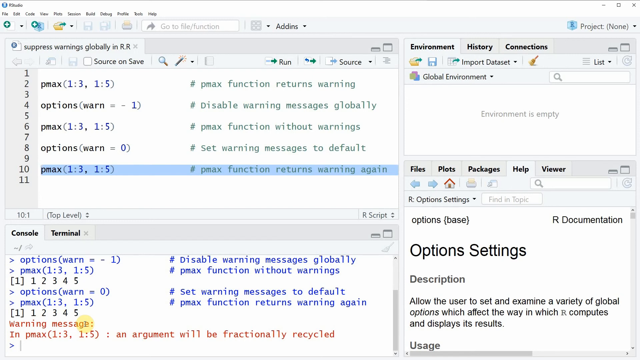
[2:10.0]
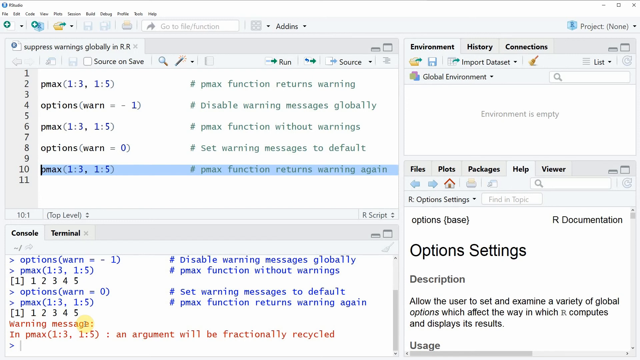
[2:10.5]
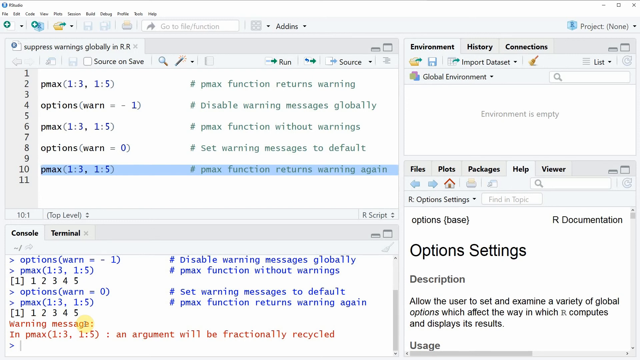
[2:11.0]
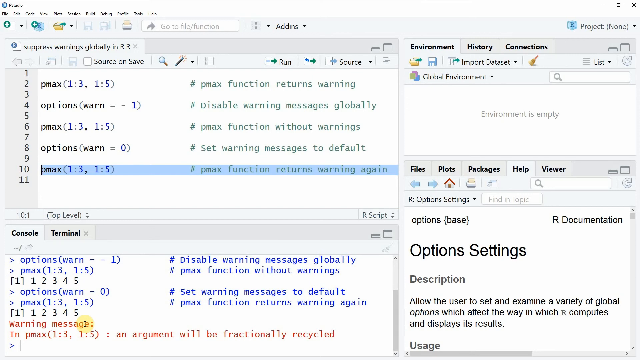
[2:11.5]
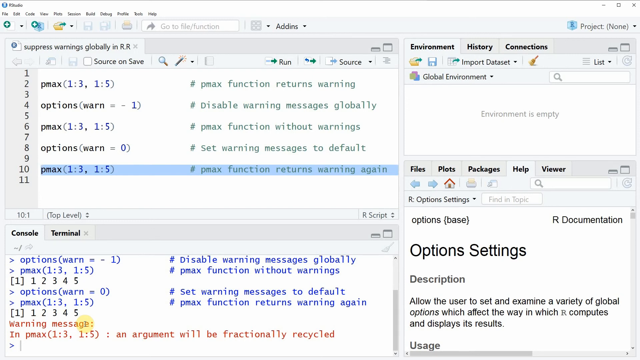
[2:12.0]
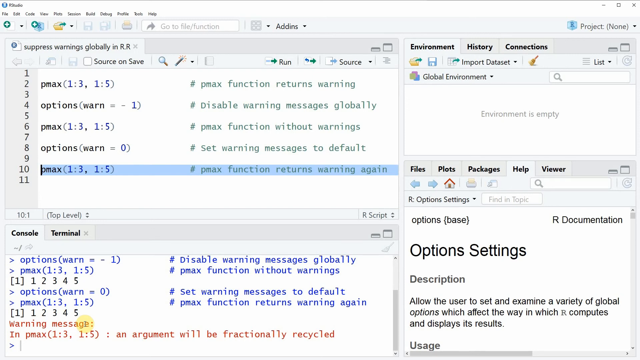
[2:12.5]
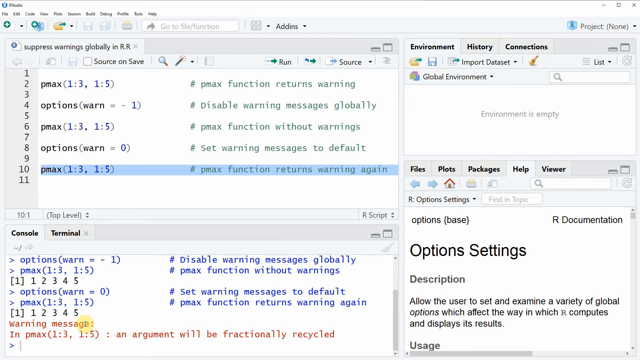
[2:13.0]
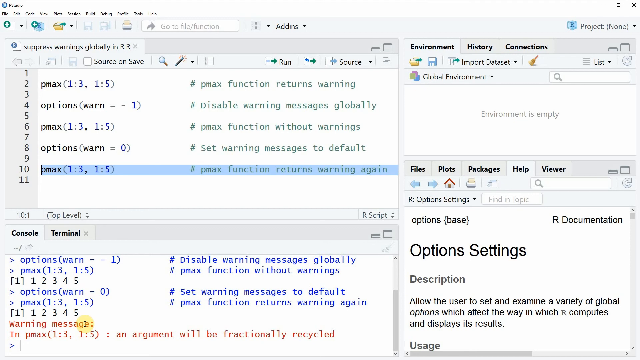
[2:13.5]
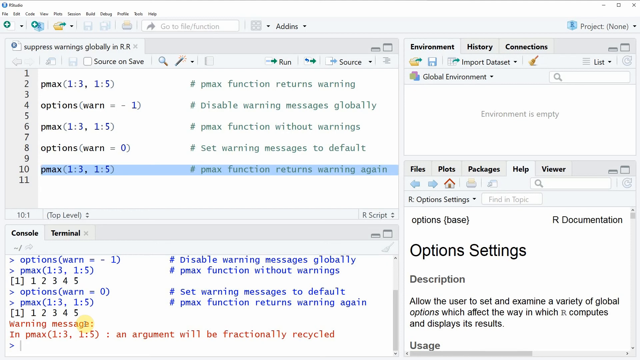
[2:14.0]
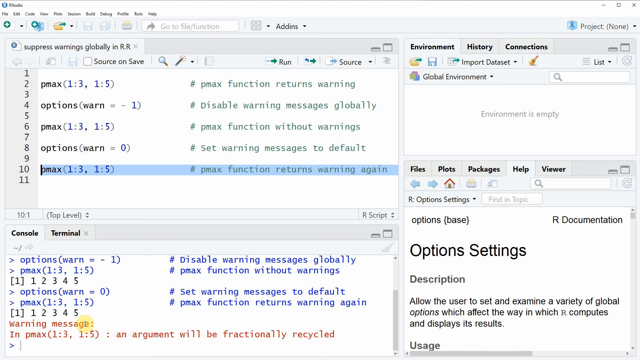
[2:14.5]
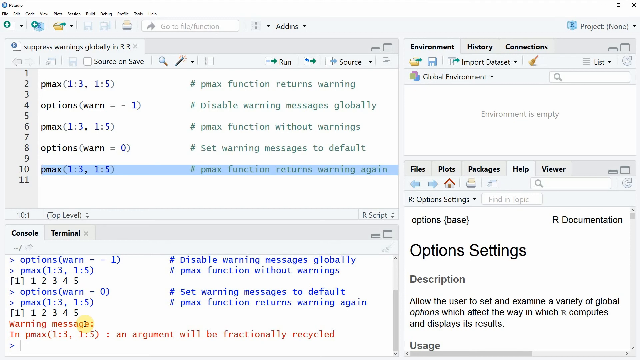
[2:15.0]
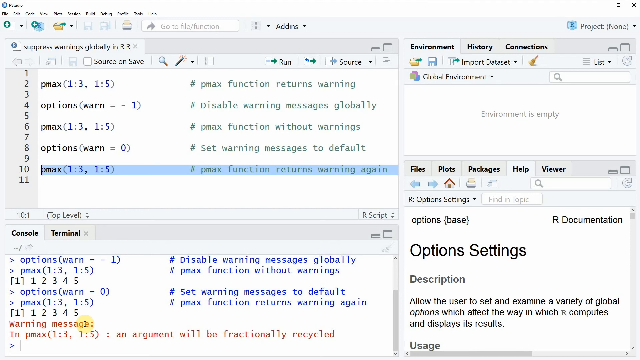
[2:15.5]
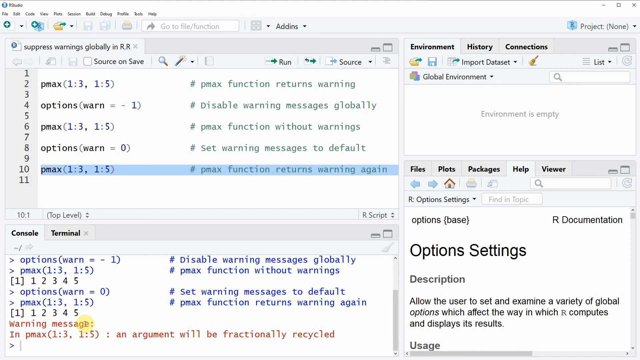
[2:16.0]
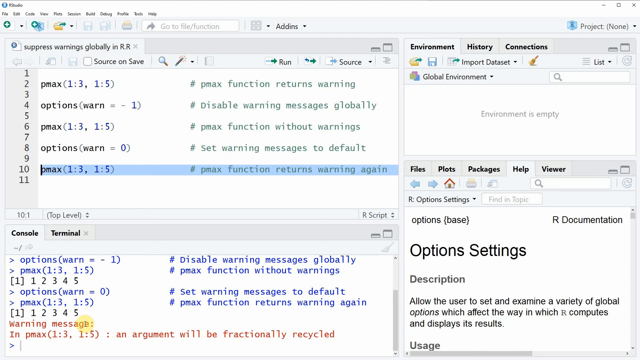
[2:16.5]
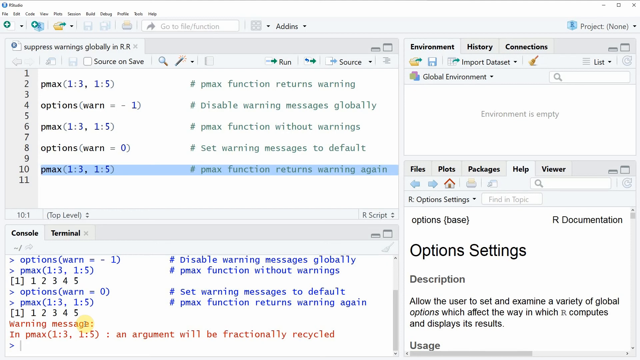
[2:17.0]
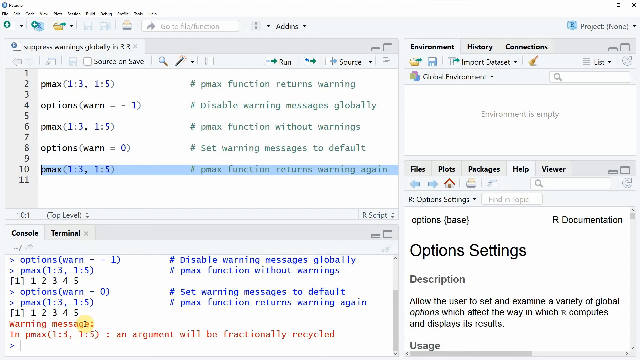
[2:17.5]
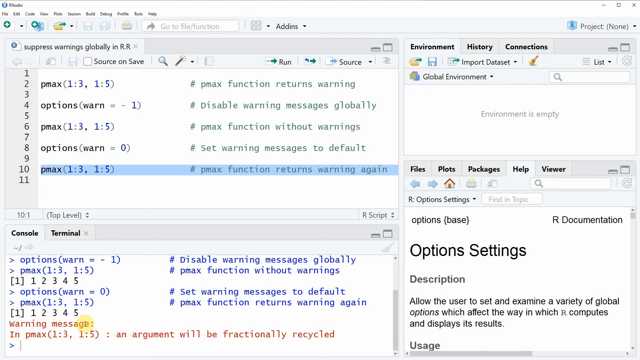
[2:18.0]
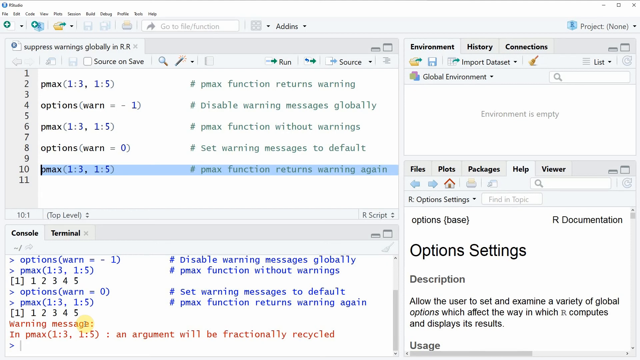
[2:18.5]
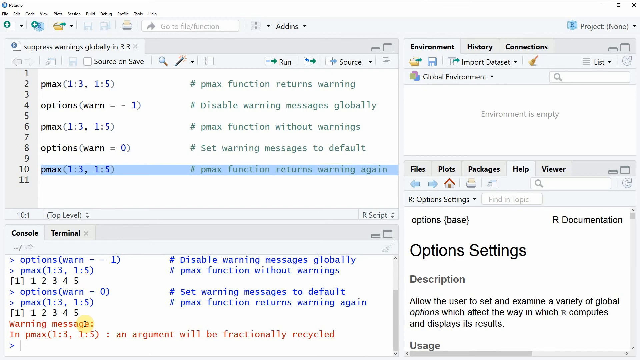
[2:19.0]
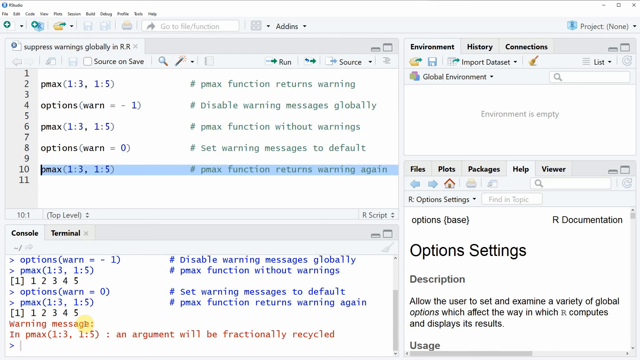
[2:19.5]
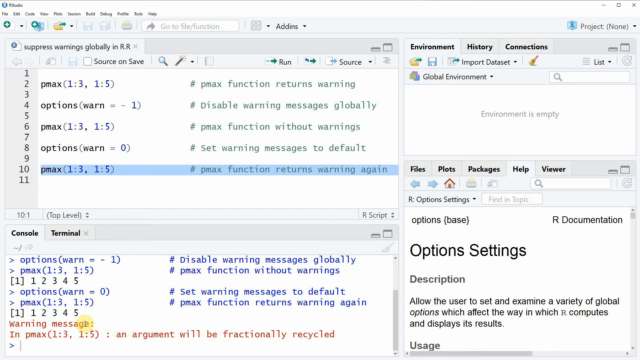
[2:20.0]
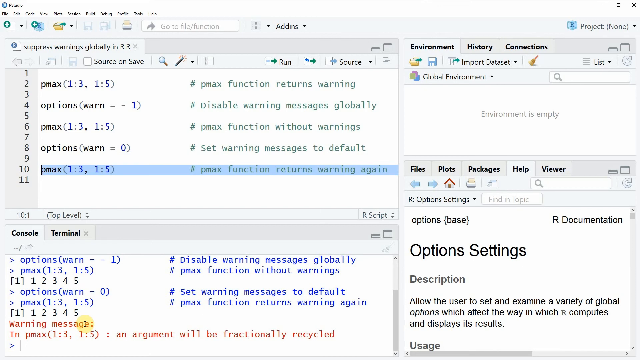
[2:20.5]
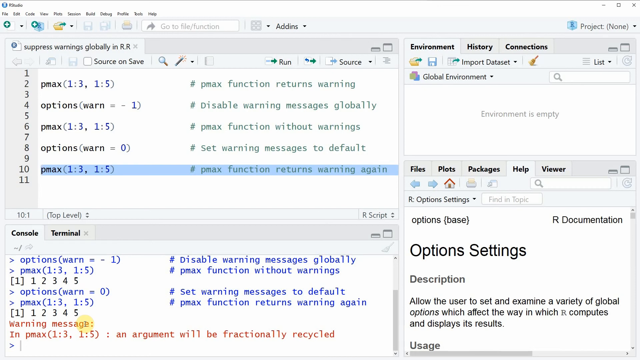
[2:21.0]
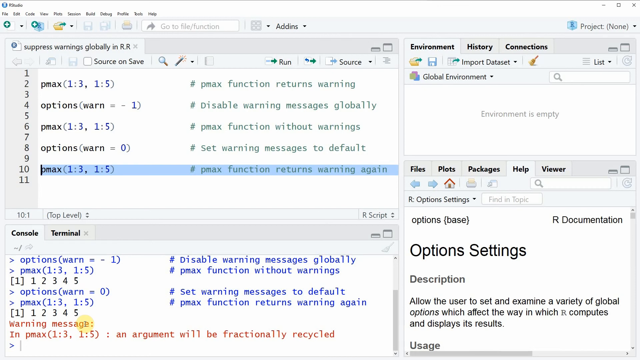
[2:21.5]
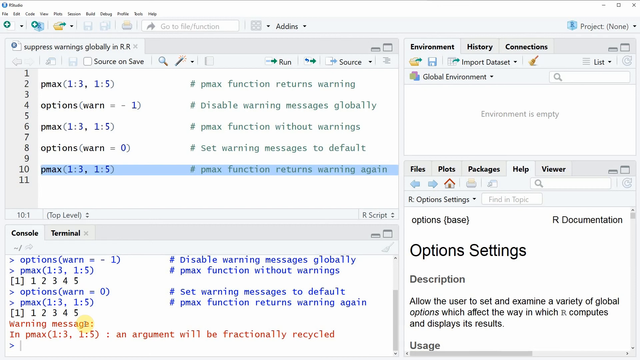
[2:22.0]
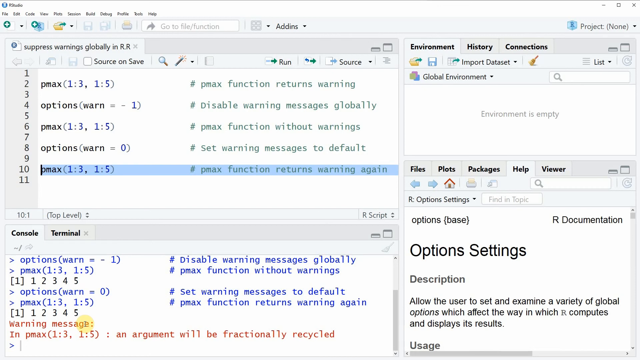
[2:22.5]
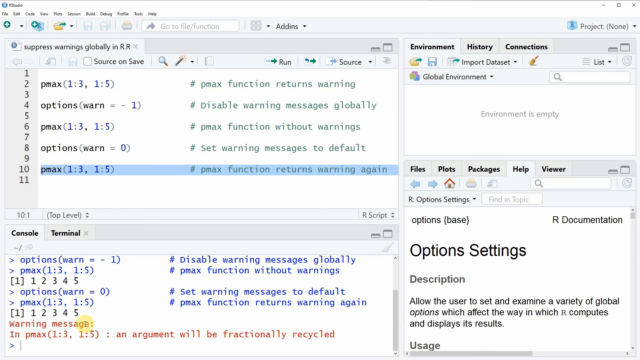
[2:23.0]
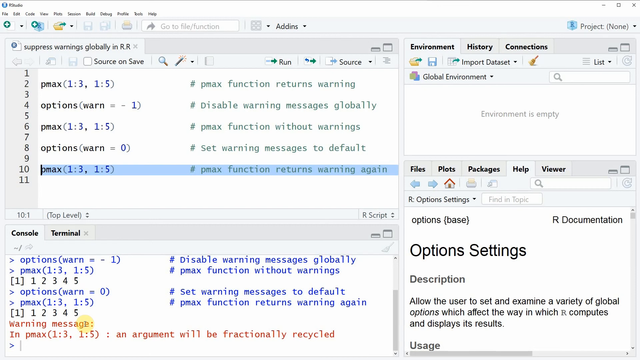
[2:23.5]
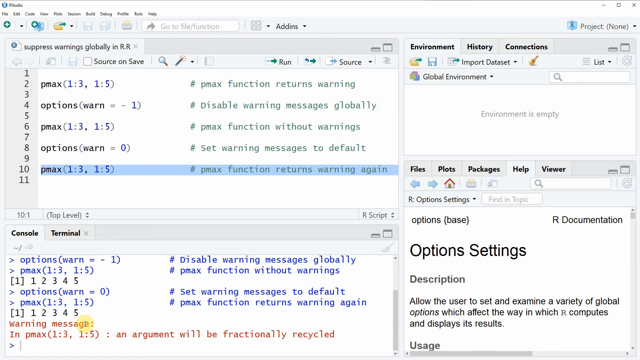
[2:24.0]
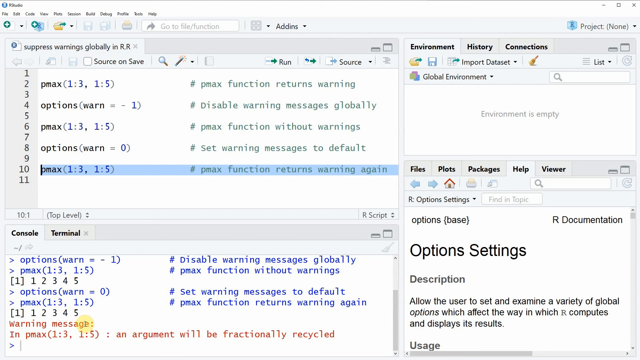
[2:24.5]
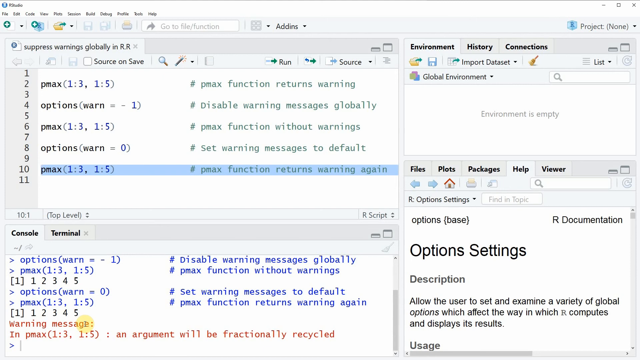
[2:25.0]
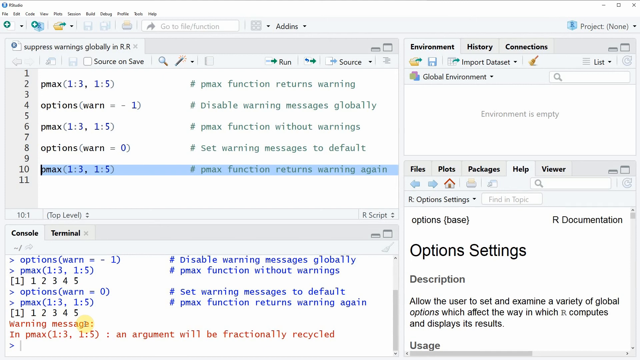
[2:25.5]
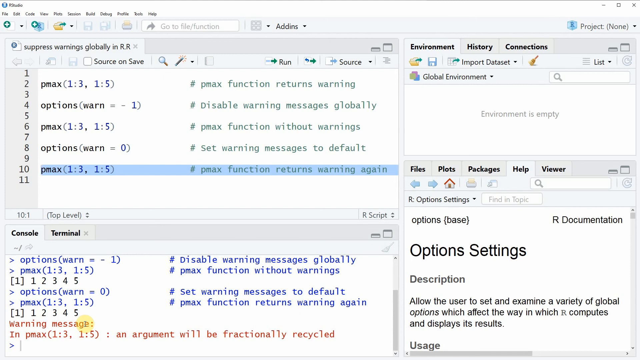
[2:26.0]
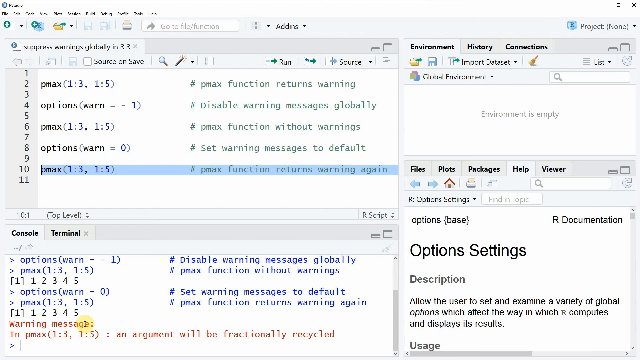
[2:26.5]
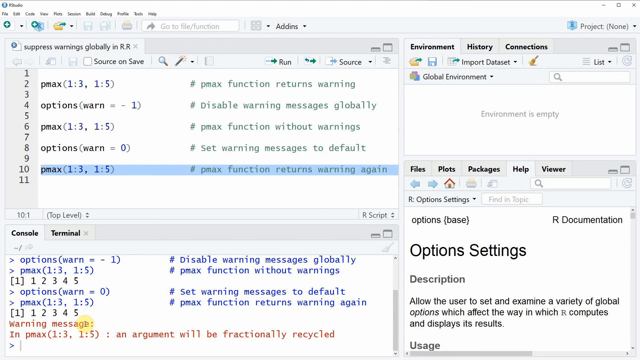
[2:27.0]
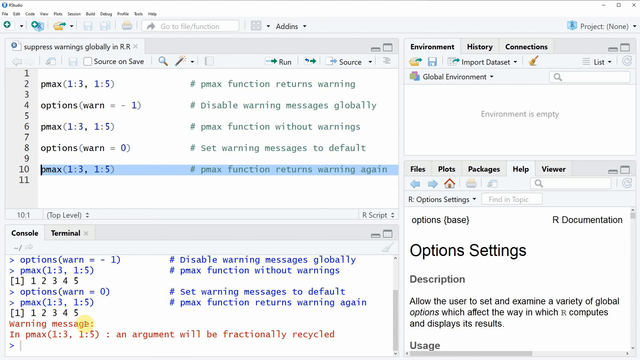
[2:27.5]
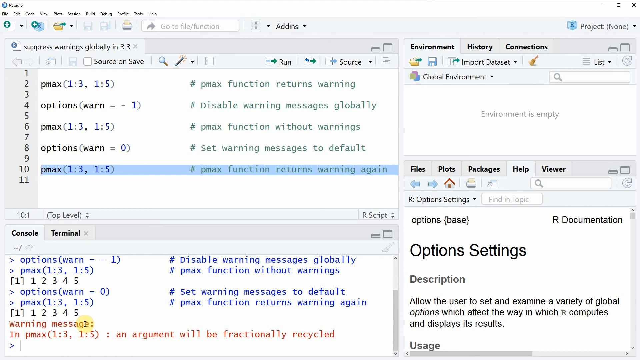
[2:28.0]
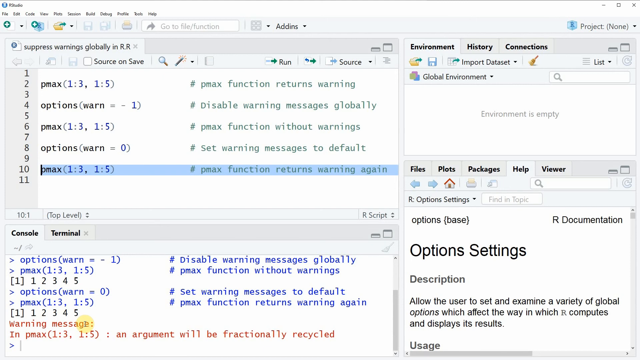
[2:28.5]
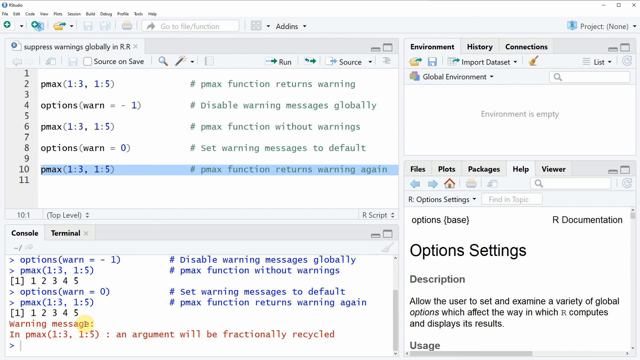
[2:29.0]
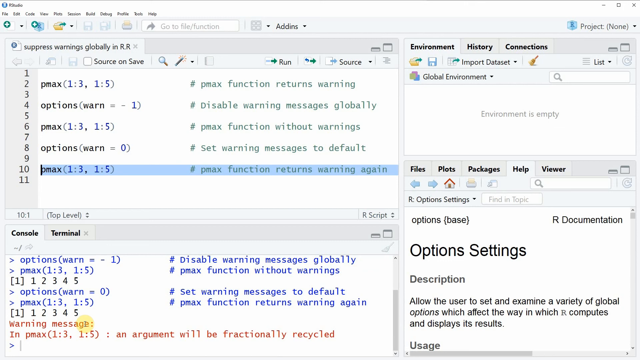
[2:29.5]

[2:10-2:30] The coding platform, whose name cannot be identified, shows inputs of pmax, options, pmax, options and pmax. A pmax line, pmax(1:3, 1:5), is selected, with a comment indicating that the pmax function will return a warning again; the code has not yet been run.